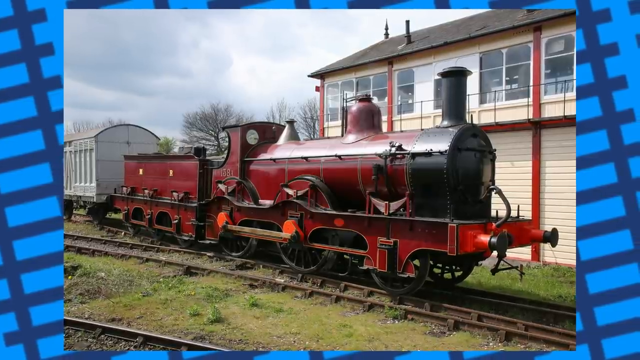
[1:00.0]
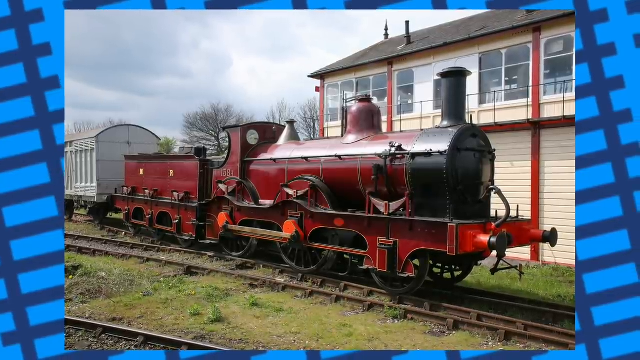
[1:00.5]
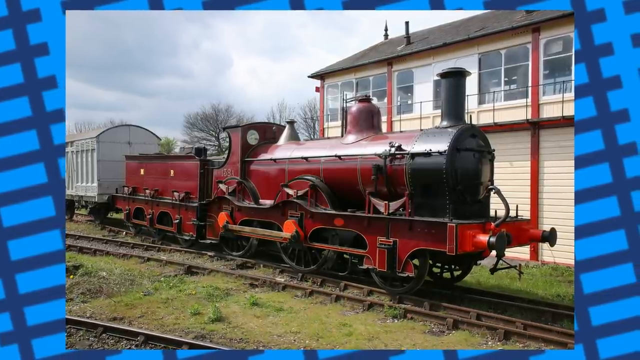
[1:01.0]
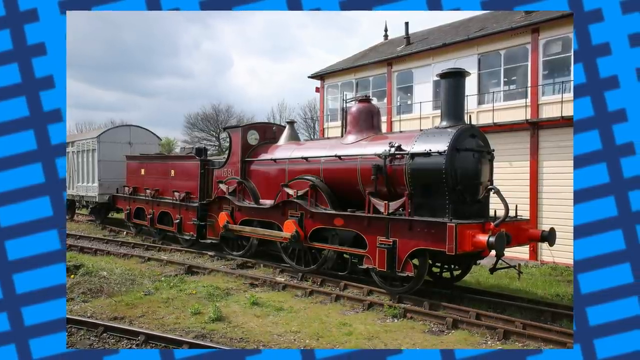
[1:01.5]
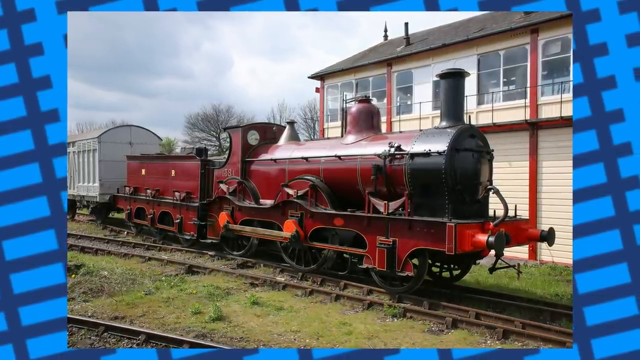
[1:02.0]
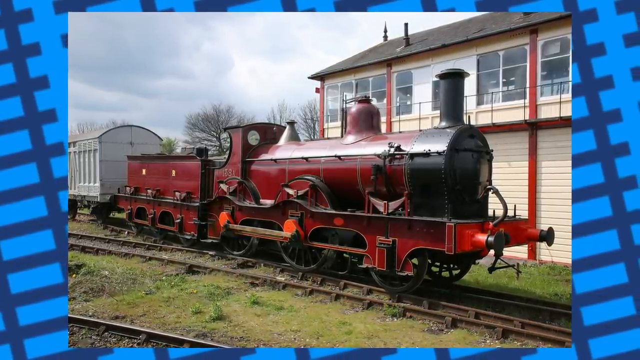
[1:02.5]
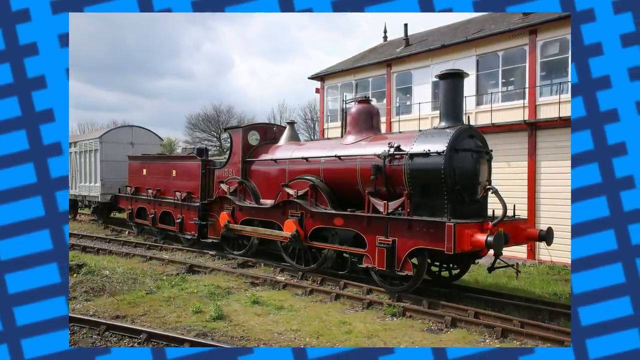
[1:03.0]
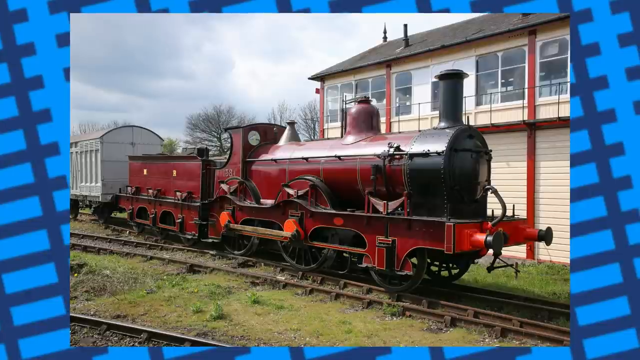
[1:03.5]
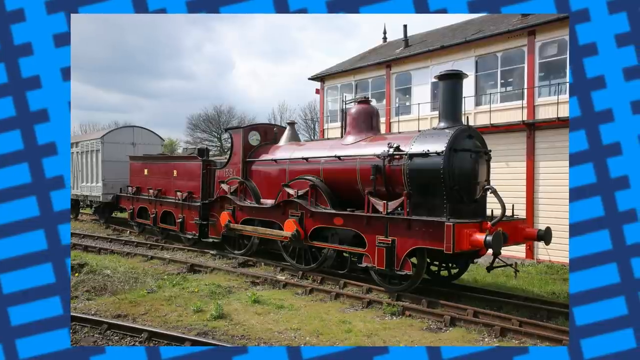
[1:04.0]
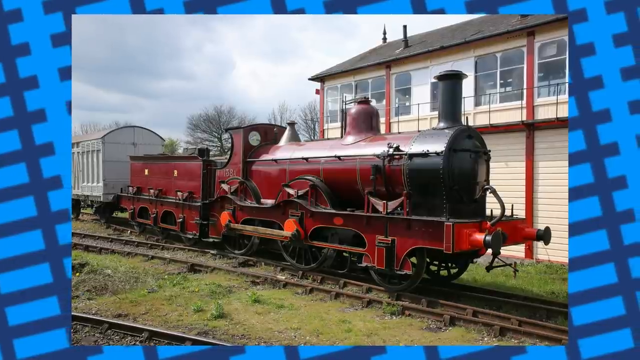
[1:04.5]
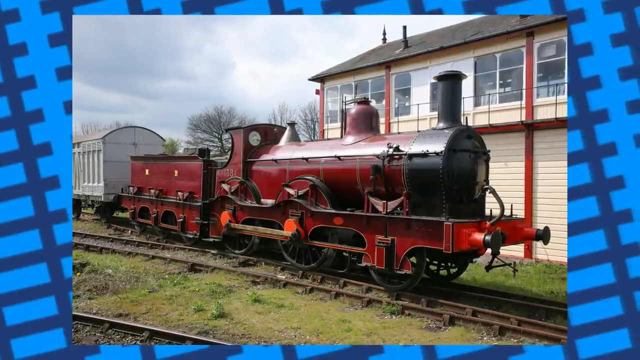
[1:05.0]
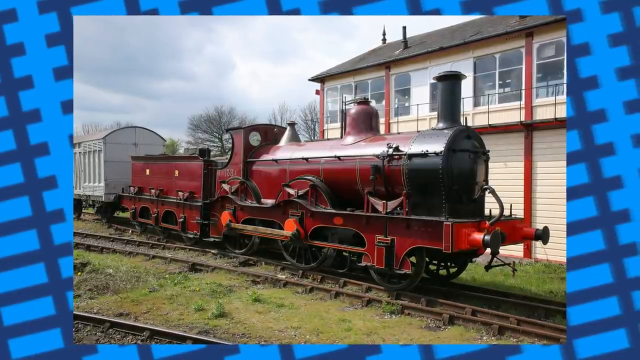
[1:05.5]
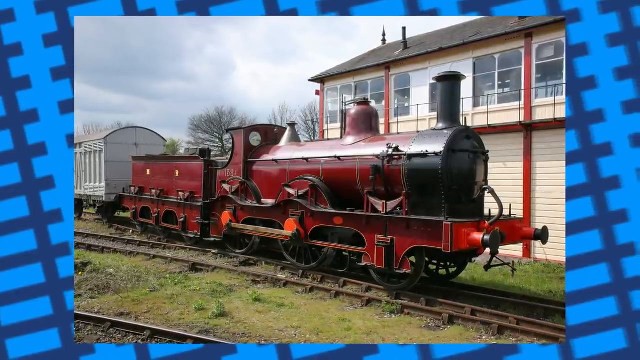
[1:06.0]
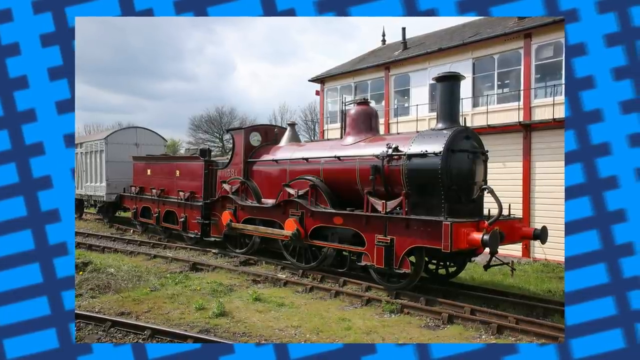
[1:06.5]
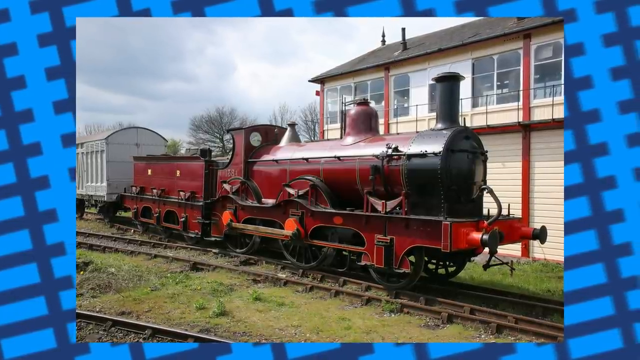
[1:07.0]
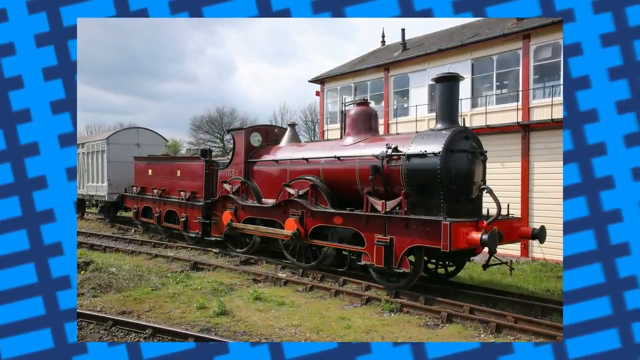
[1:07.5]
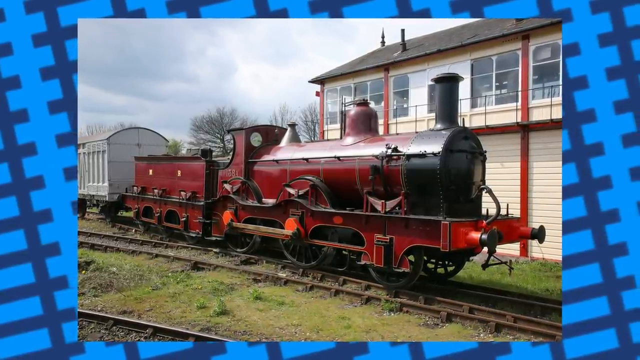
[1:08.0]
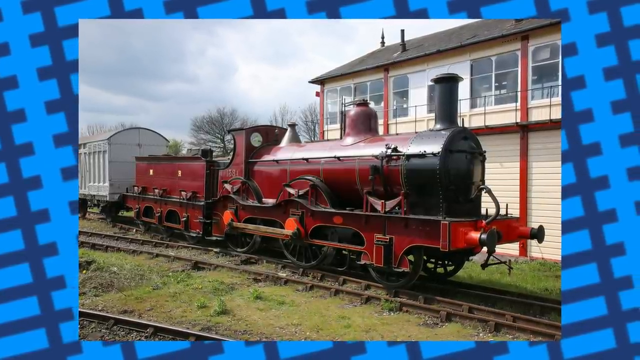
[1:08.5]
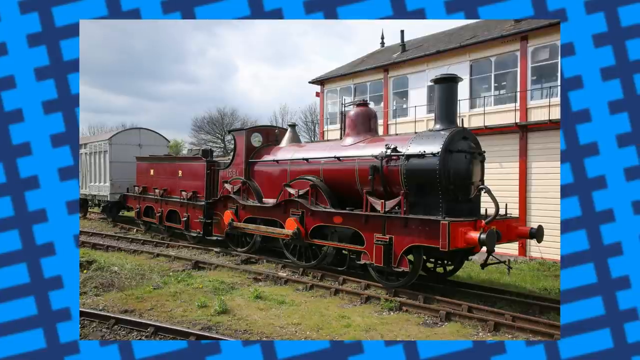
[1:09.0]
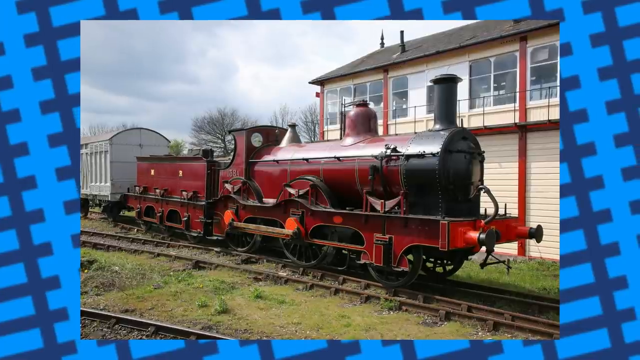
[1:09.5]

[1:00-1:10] The same picture remains: the train with a red front and light gray or white cars toward the back, traveling on flat land with the white building in the background and leafless trees in the distance. The picture is still set on the light blue background with dark blue train tracks. The white two-story building behind the train has white siding on the bottom with red trim, and its second story has lots of windows under a black slanted roof.